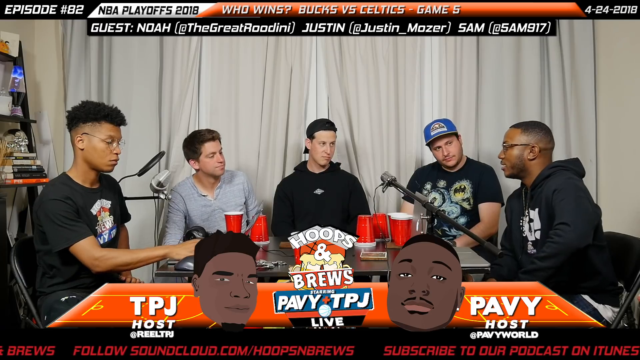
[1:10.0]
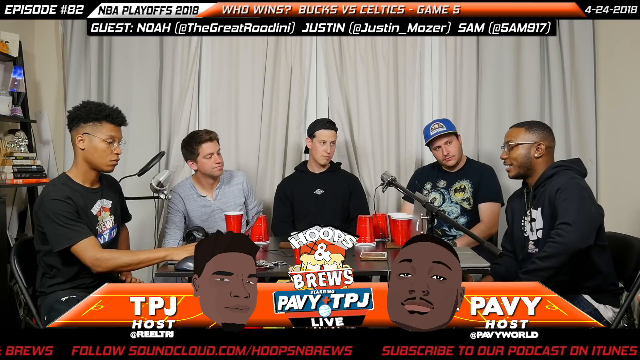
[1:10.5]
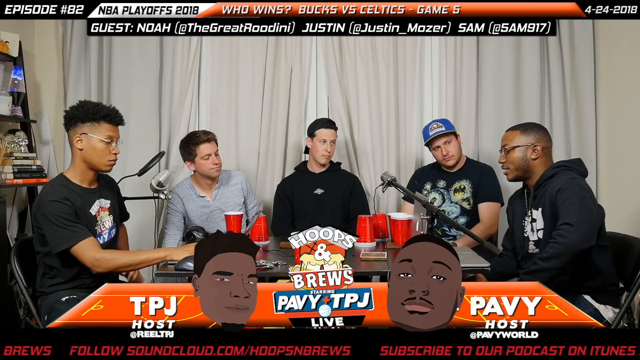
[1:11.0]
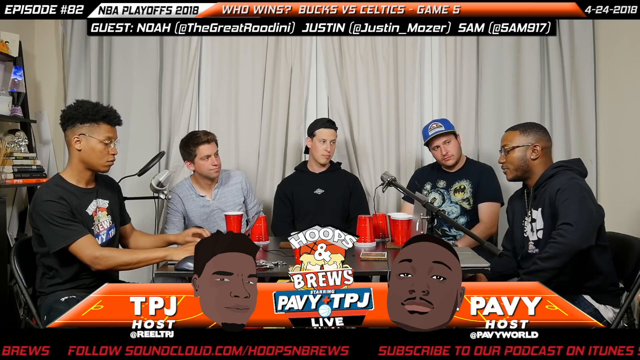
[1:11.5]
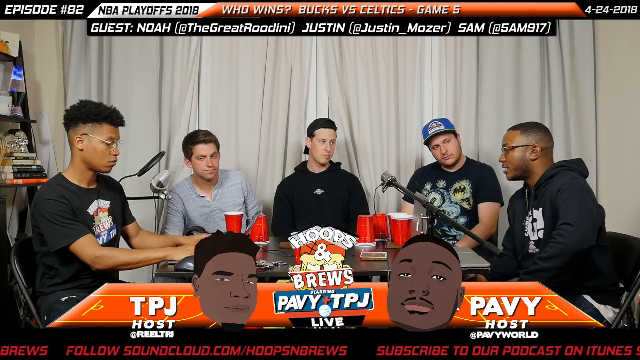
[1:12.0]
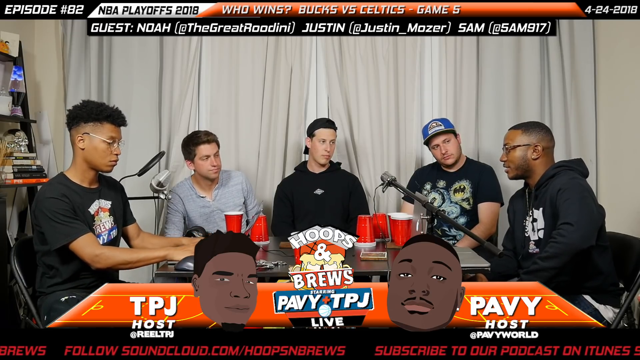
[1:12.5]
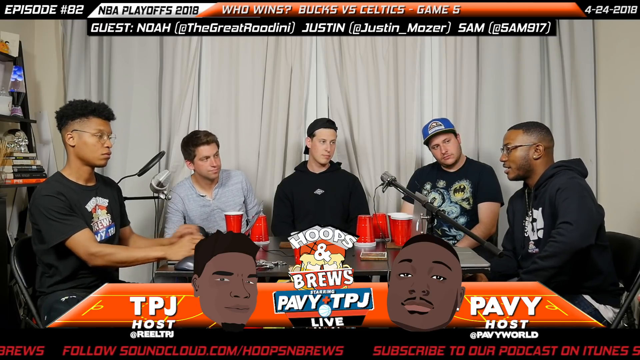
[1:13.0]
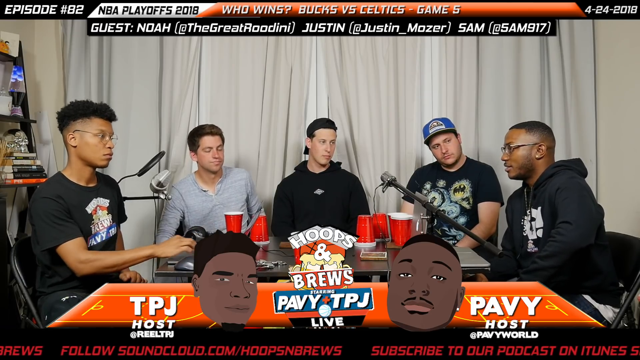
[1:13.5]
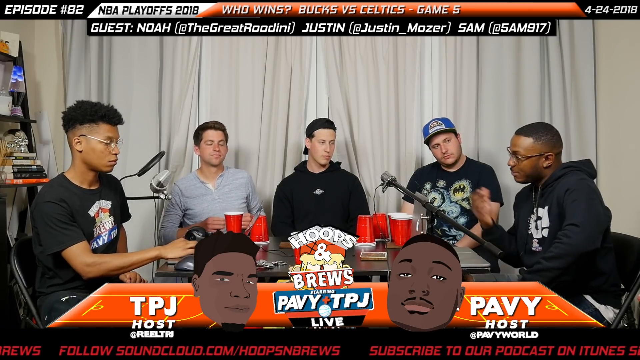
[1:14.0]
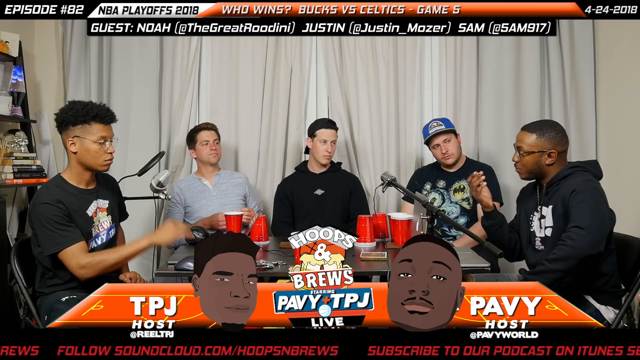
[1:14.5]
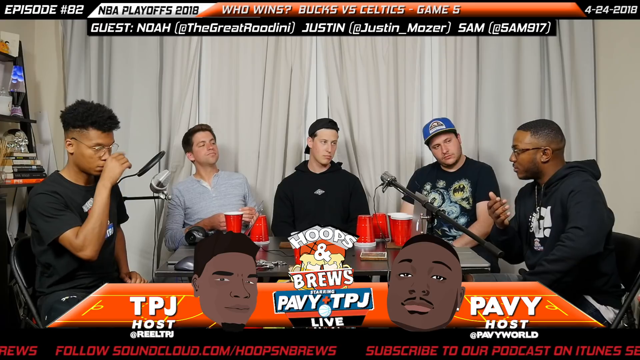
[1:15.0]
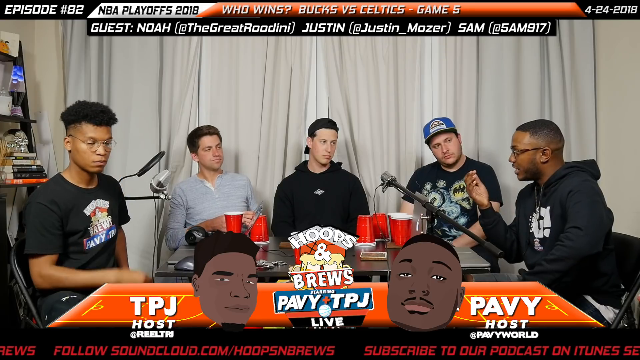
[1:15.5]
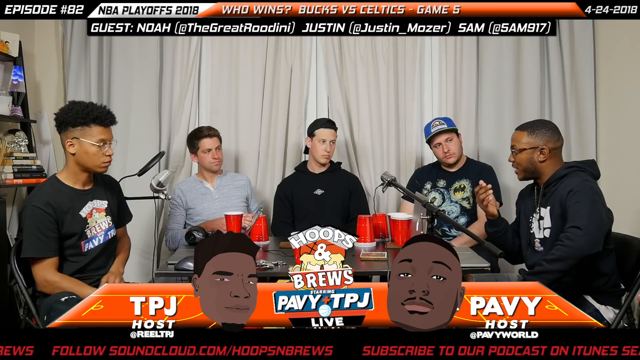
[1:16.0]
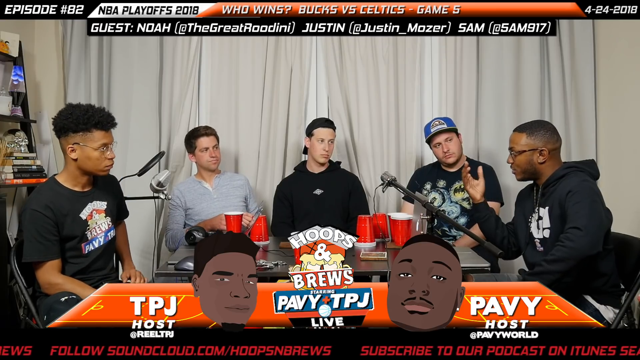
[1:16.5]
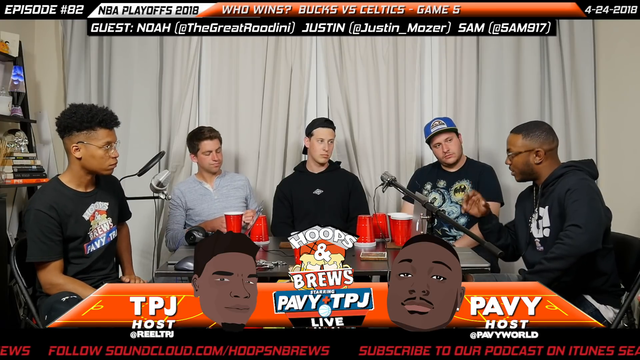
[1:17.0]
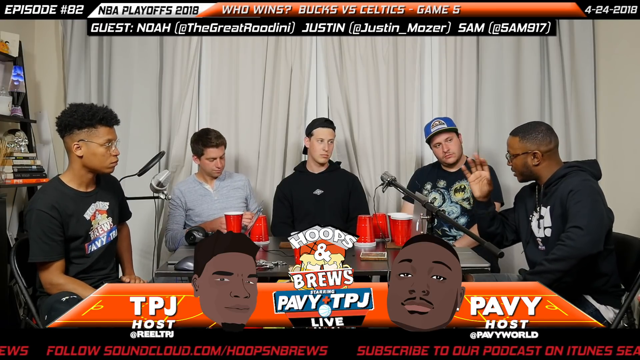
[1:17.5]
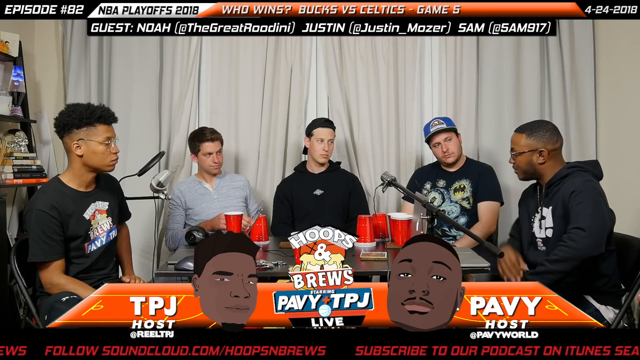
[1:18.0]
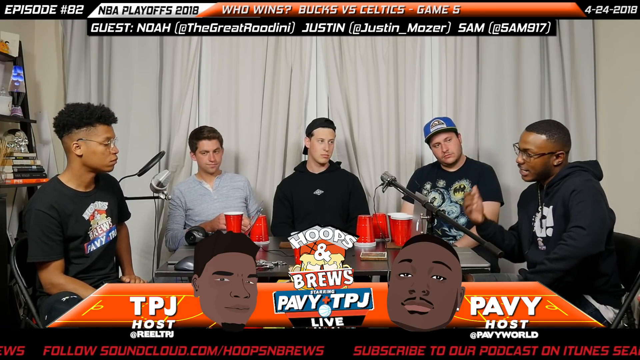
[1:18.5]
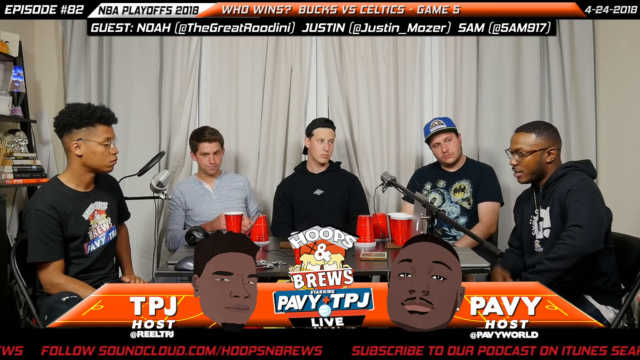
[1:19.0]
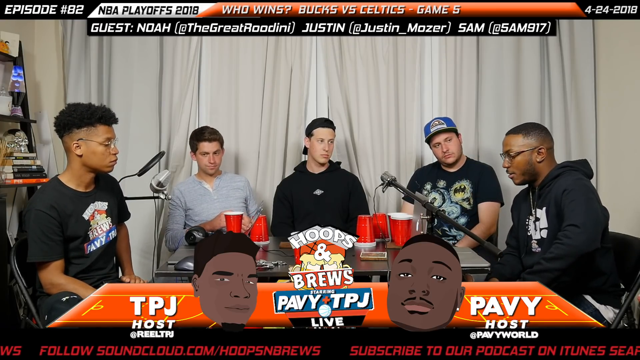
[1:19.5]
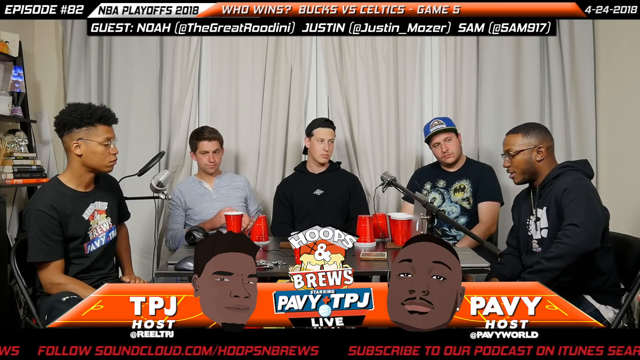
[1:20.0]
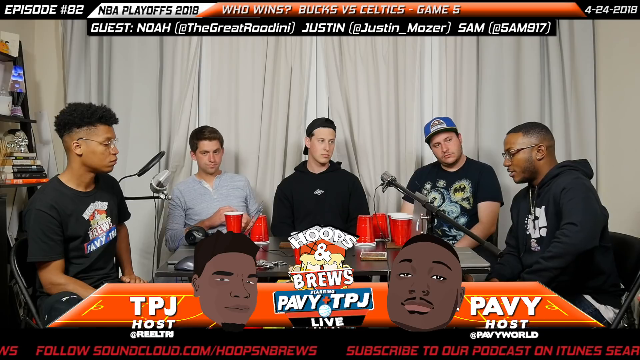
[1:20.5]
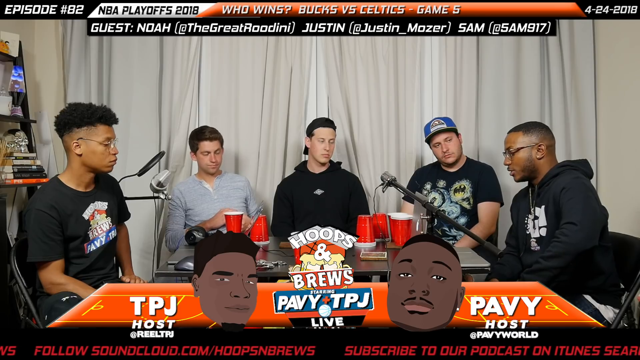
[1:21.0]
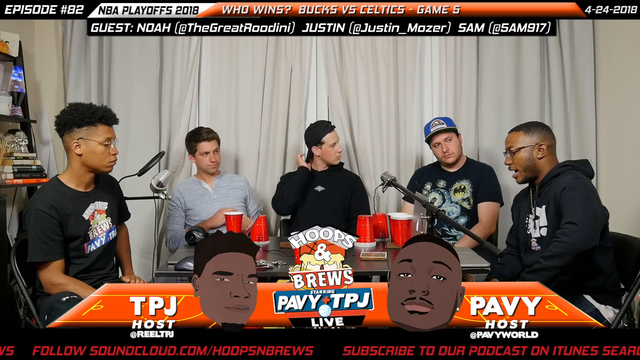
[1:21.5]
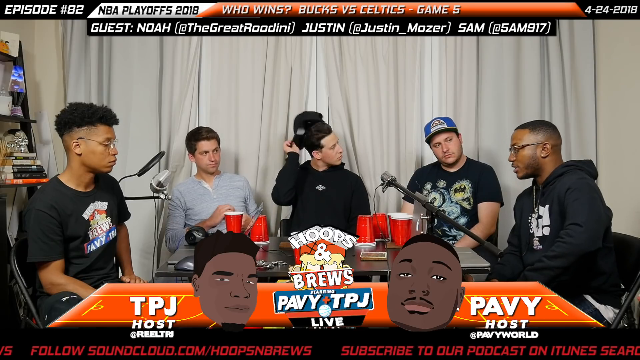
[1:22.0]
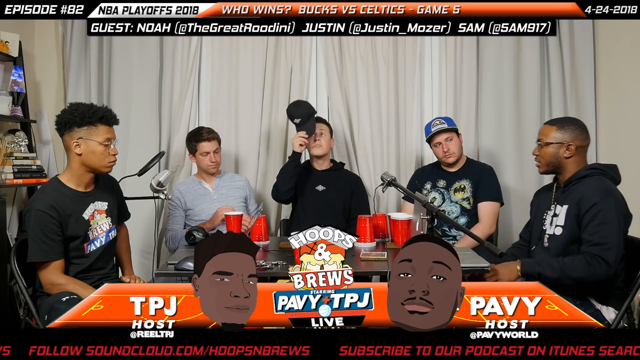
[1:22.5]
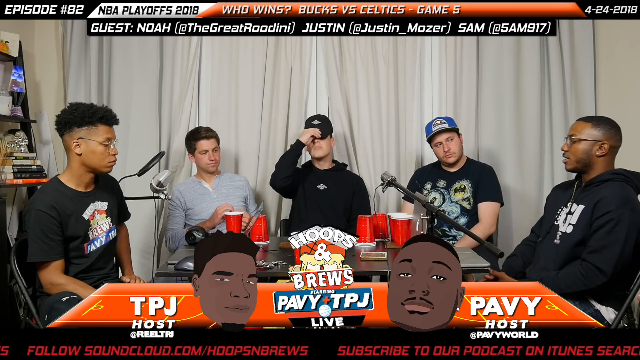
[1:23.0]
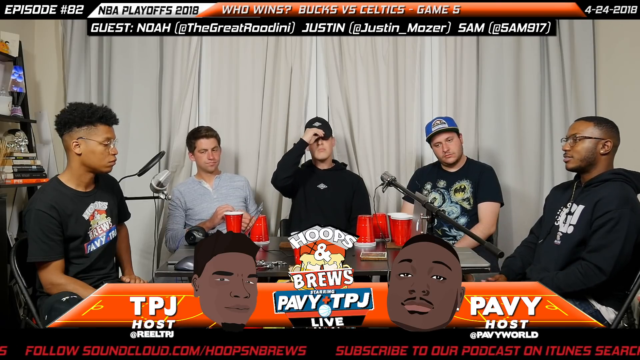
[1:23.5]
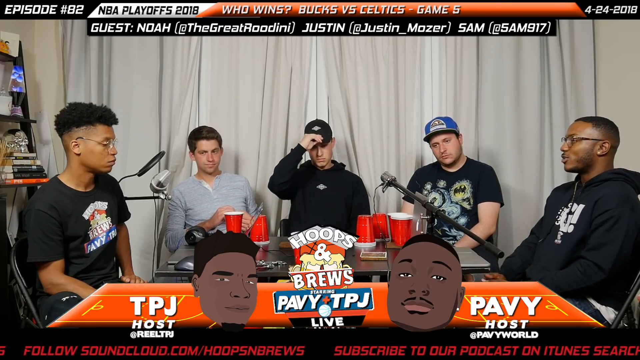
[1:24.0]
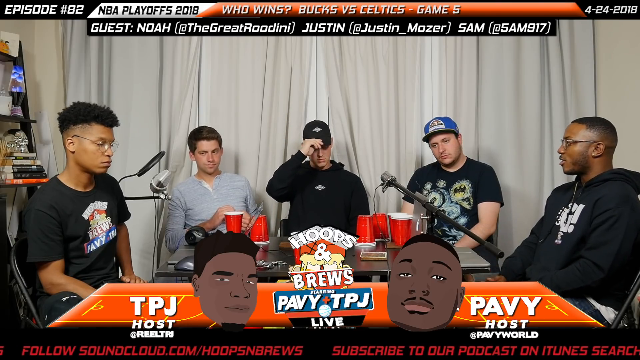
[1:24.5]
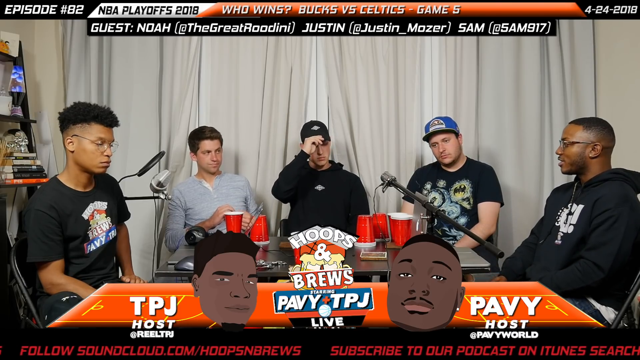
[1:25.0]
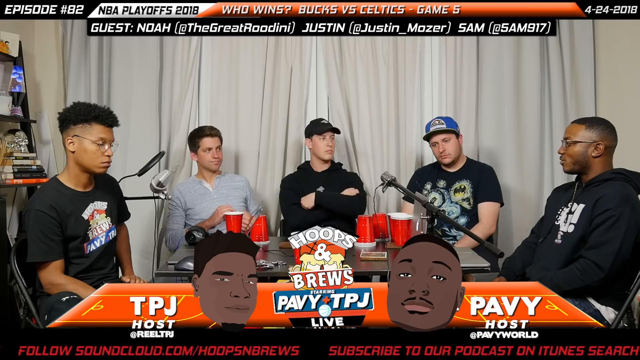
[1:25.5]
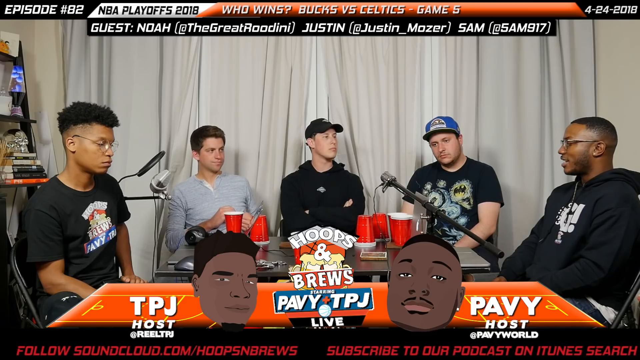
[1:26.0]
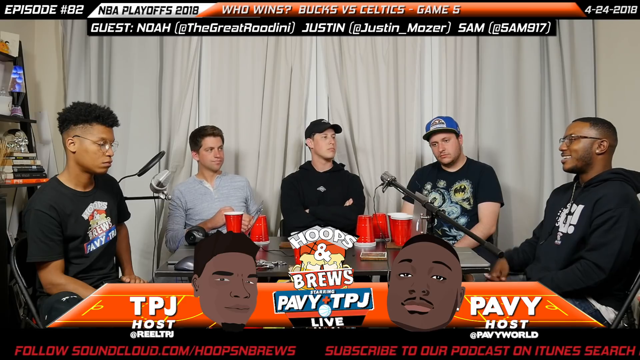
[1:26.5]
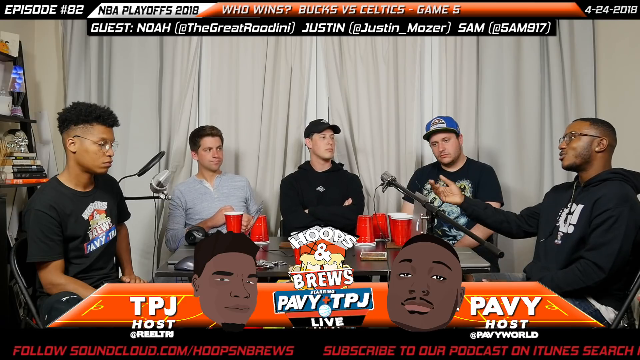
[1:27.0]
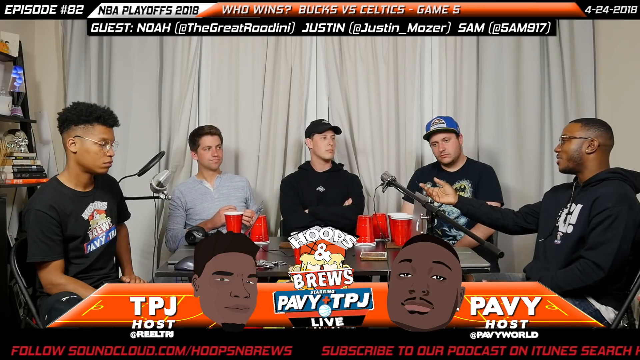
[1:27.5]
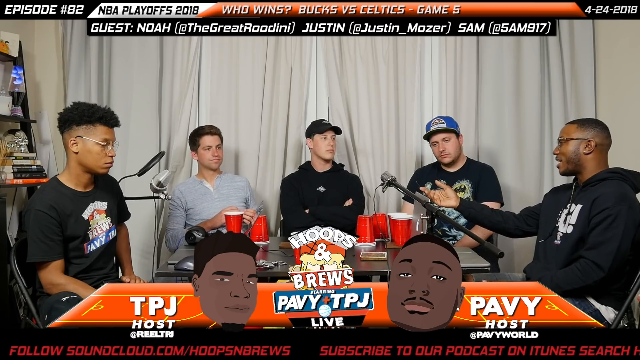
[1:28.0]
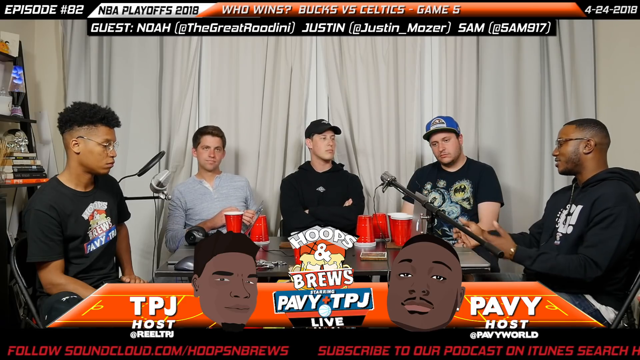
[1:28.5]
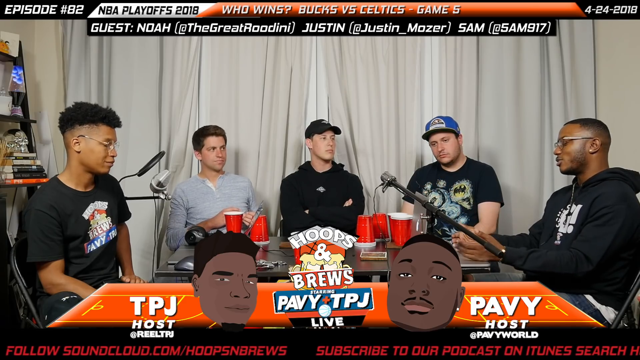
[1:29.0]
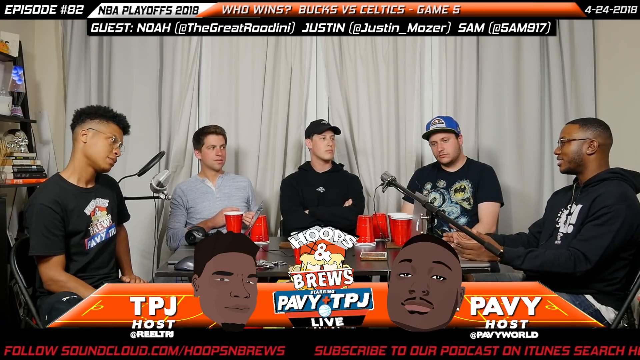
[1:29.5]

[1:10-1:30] The same Hoops and Brews podcasters sit and talk about the game. Text at the top of the screen reads "NBA playoffs 2018" and asks who wins Bucks vs. Celtics game 5, and the top right section of the screen reads "April 24th, 2018." The commentators wear shirts of different colors, including black and gray, and one of them wears something colorful.